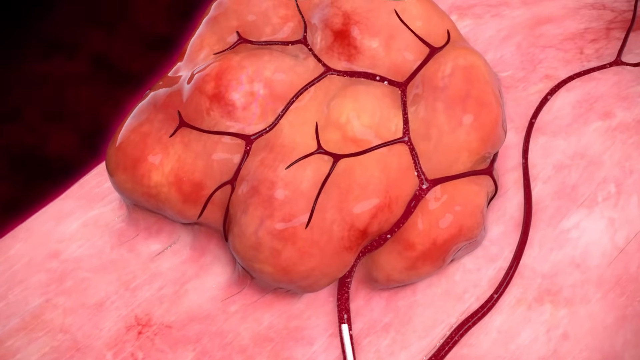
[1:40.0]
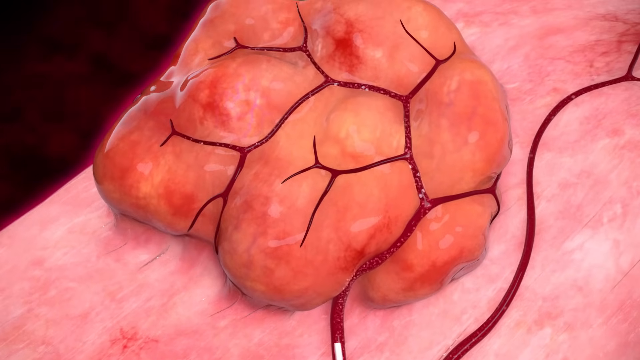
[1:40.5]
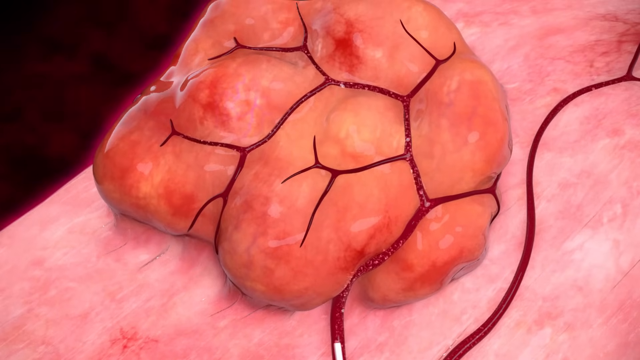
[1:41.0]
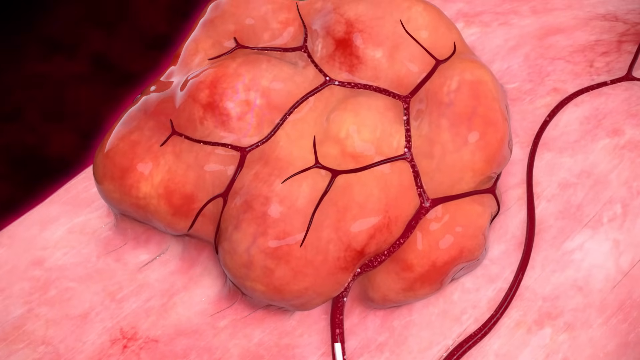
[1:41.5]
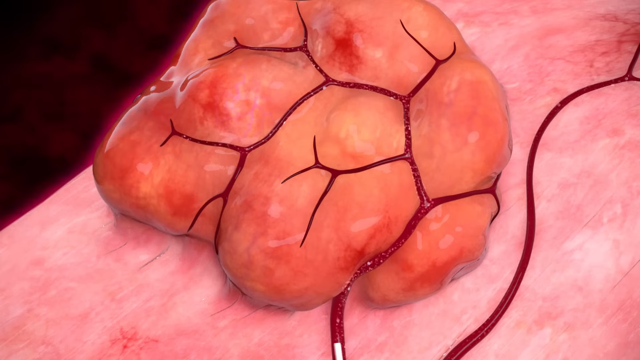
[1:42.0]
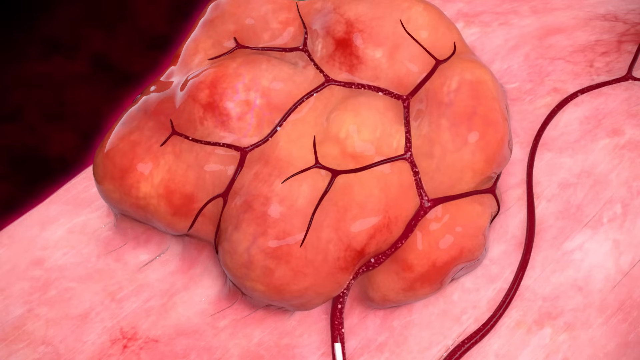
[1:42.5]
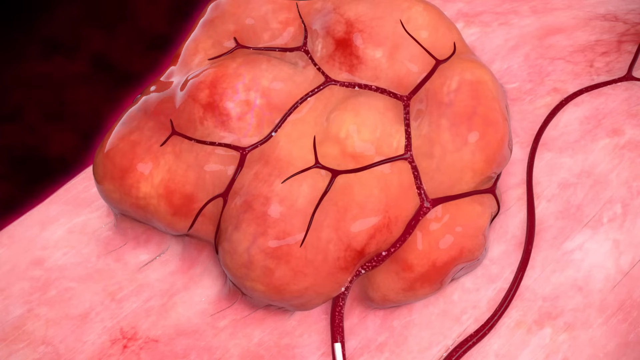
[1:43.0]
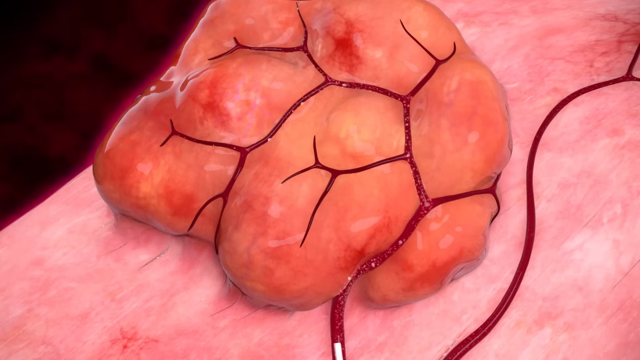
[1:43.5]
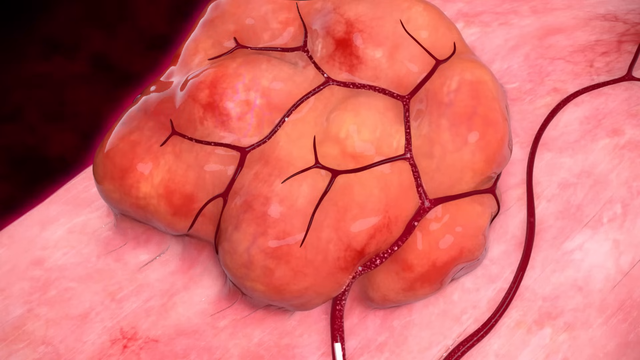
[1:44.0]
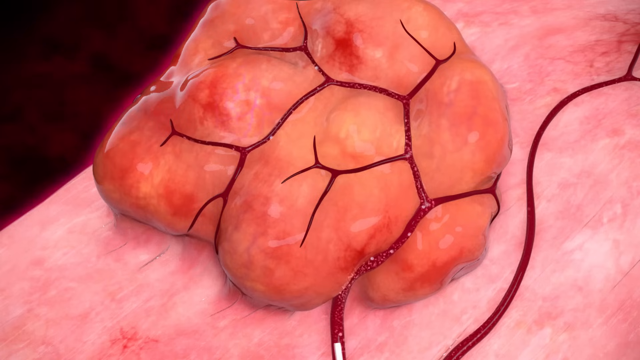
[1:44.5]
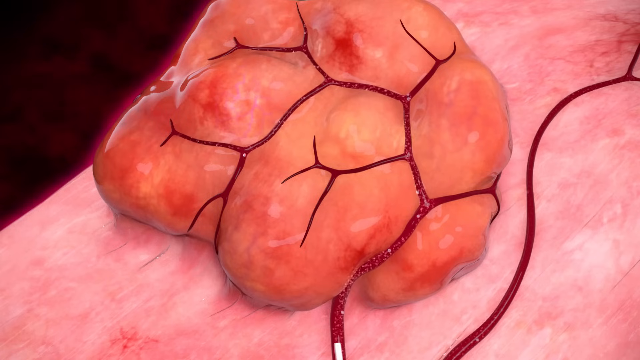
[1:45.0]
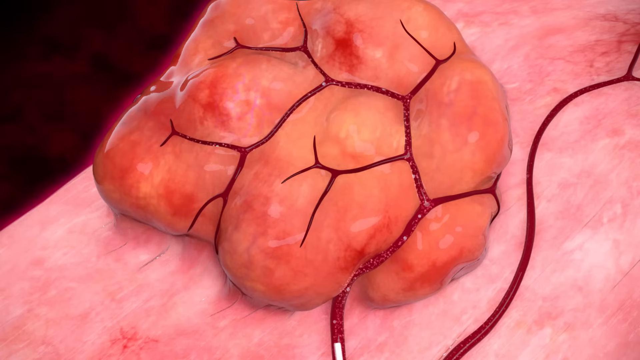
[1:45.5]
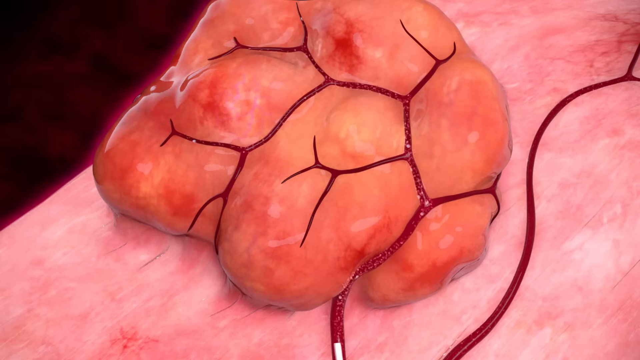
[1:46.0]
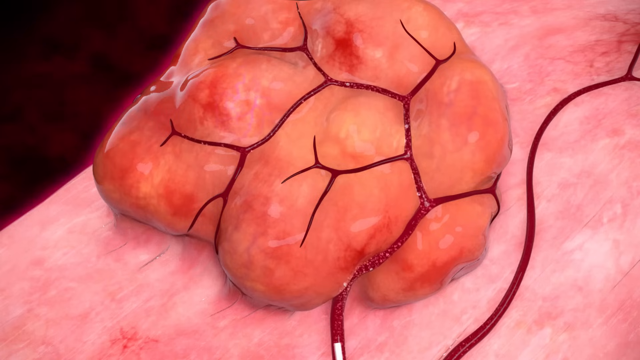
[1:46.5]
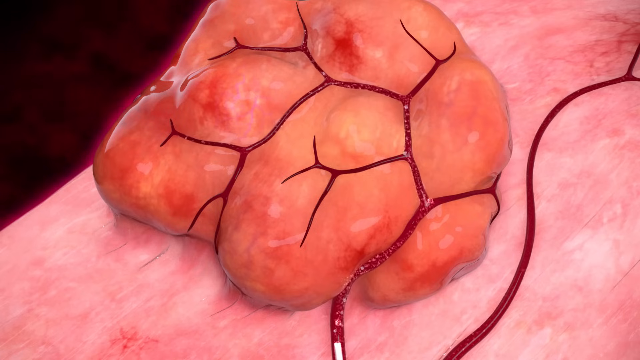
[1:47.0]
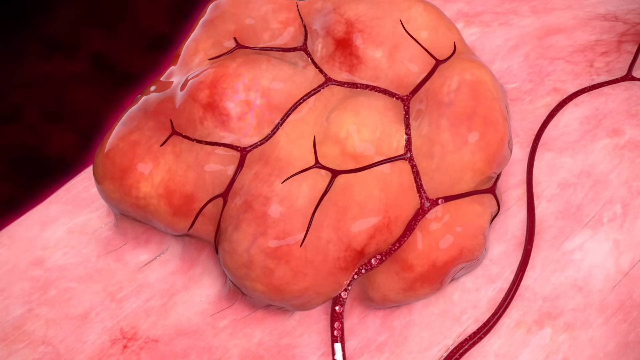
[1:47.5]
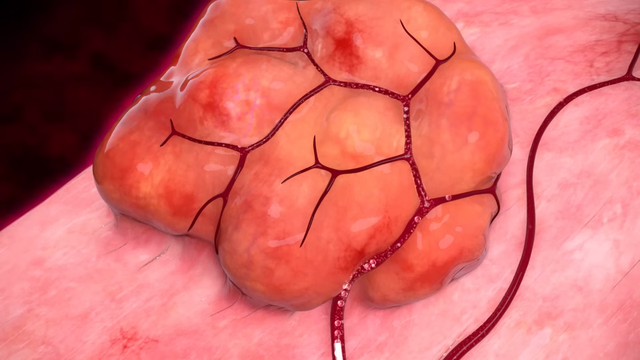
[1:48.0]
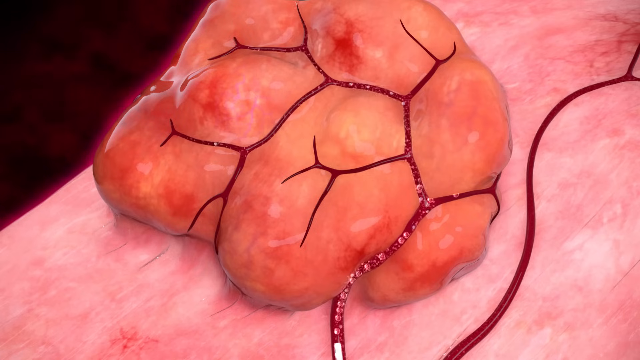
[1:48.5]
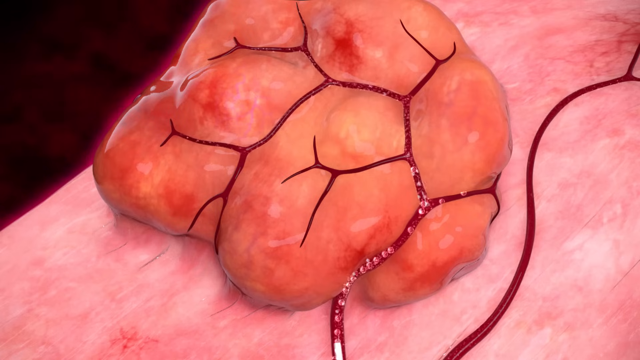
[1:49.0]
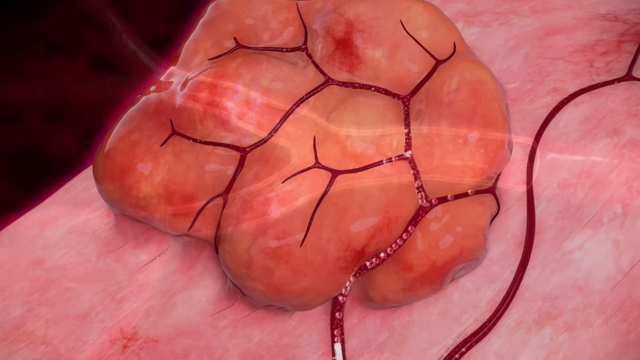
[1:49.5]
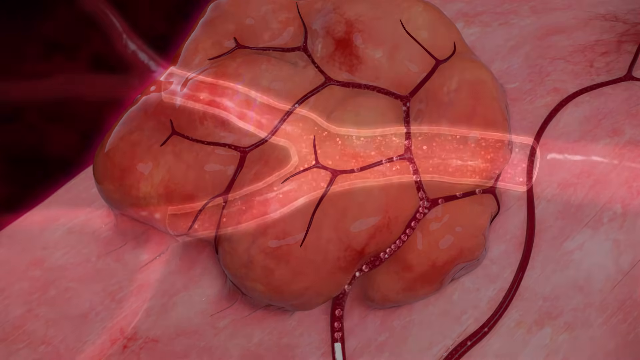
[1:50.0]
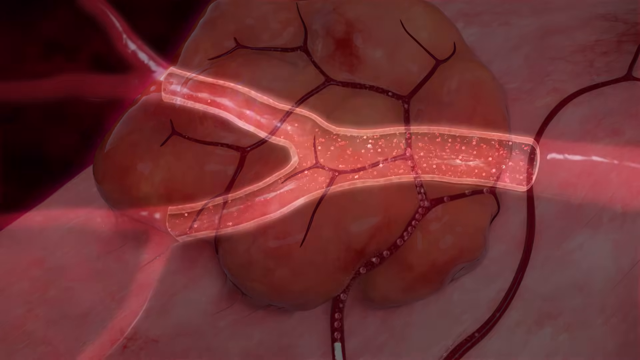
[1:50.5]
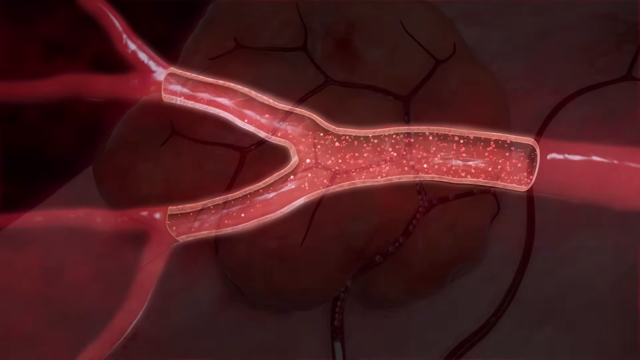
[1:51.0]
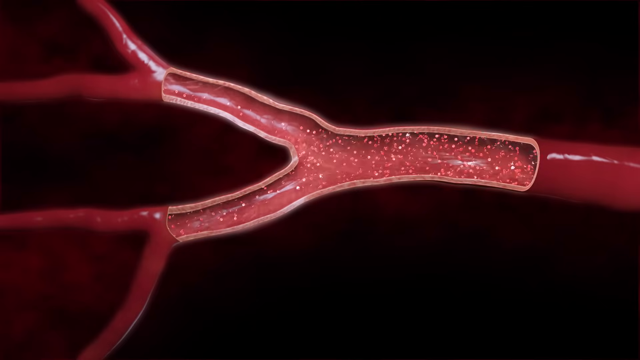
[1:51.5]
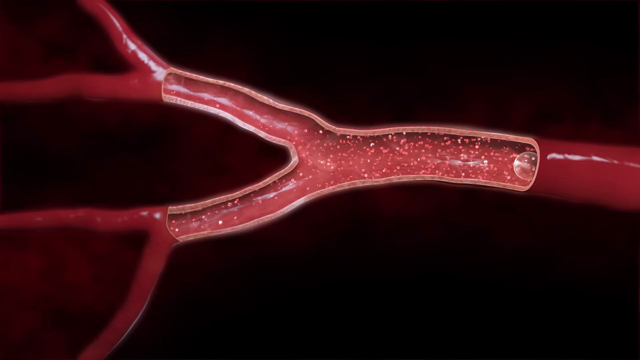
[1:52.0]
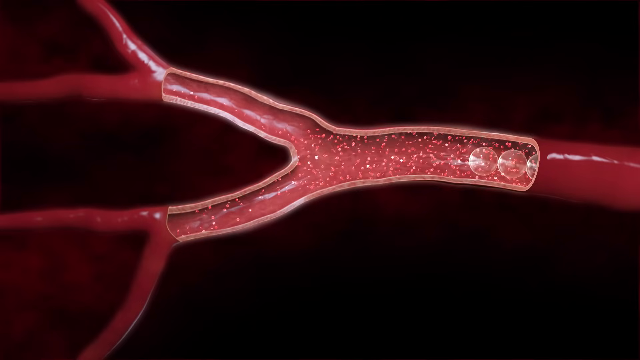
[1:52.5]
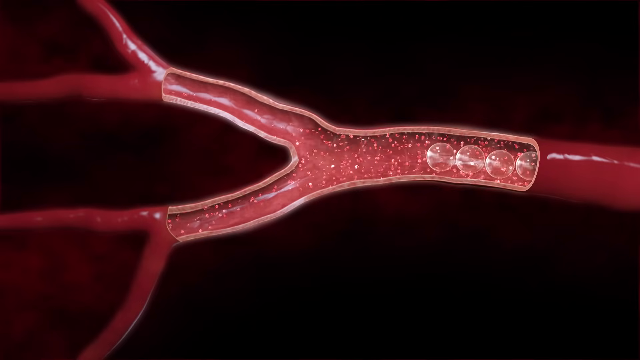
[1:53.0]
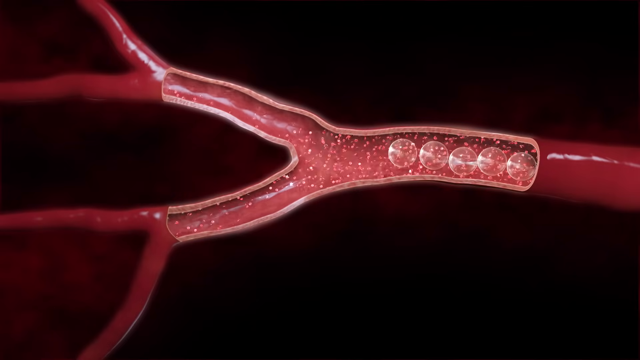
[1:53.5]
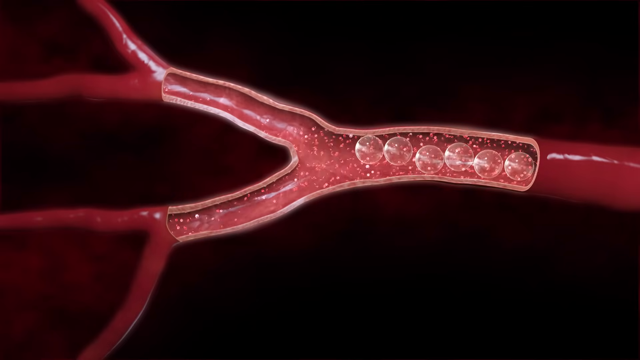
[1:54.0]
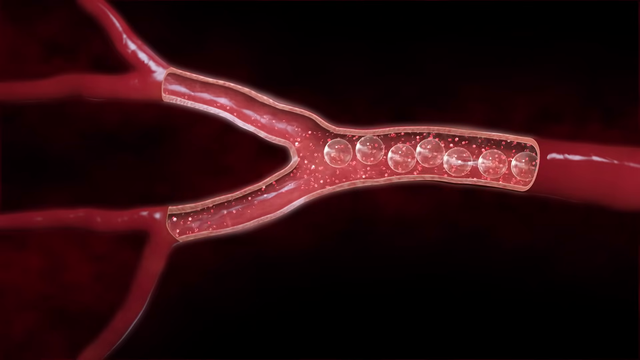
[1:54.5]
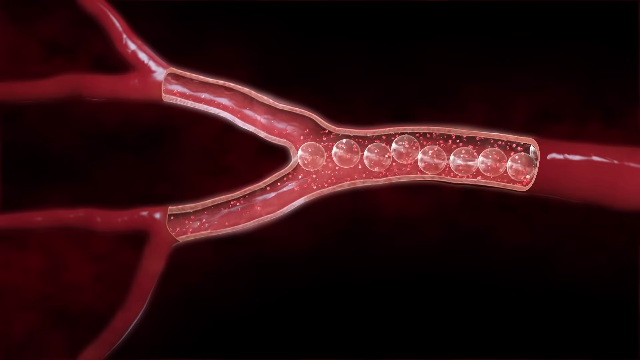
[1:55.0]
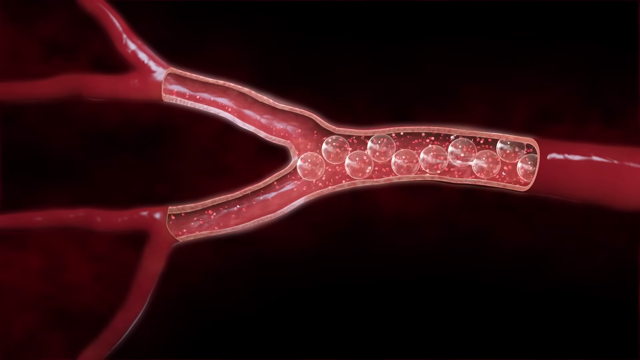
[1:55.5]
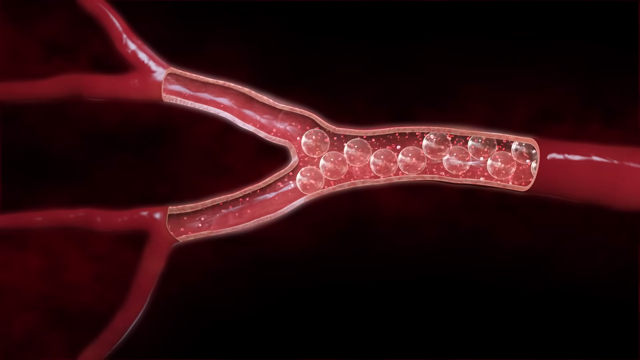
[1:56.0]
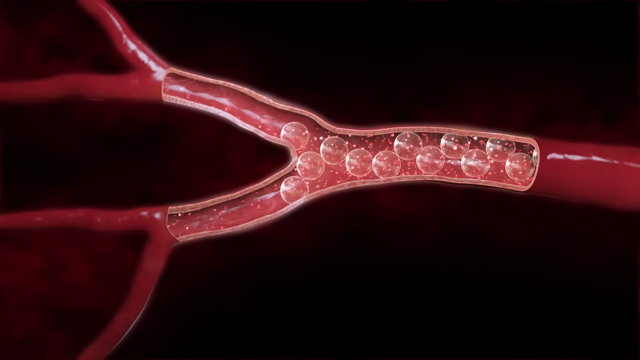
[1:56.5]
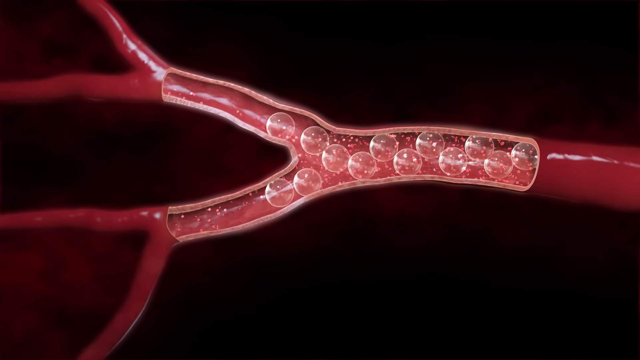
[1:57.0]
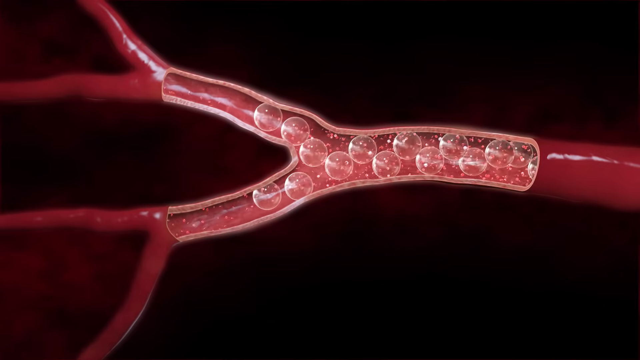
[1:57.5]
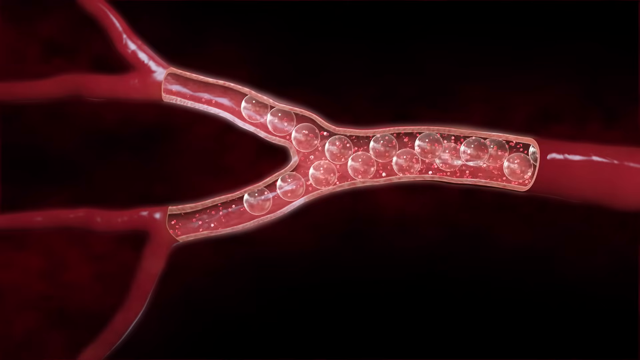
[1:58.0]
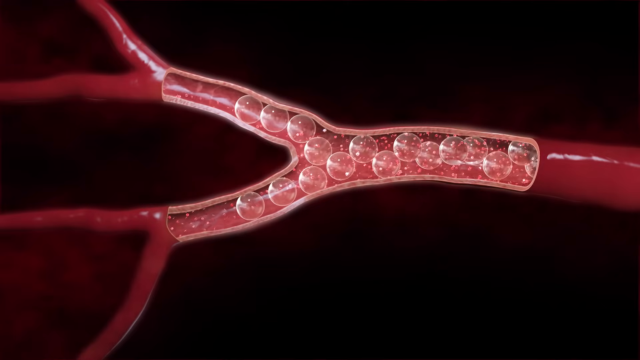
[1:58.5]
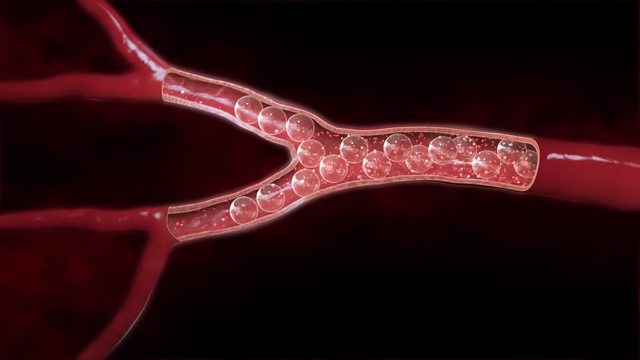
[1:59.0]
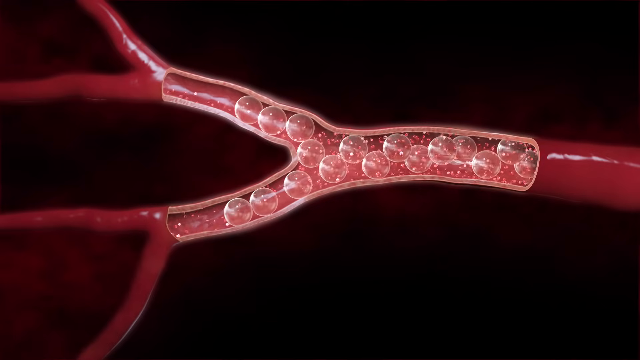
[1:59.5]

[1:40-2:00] In the CGI of a woman's reproductive tract, a close-up shows the medicine, which looks like little white balls, traveling through the vessels, apparently veins. A close-up cross-section of a vein then shows little balls and also big bubbles moving through it, apparently the medicine going in to shrink the fibroid. They look like little clear ping-pong balls or bubbles going into the fibroid, seemingly to kill it.